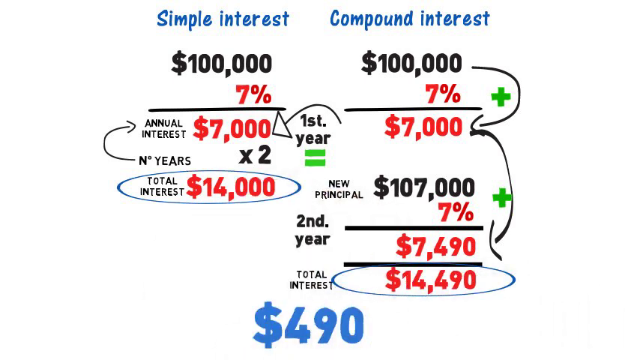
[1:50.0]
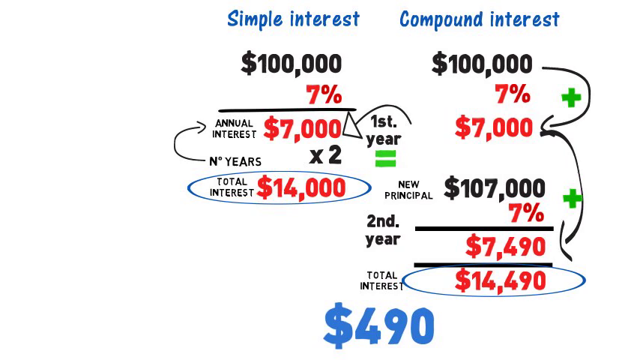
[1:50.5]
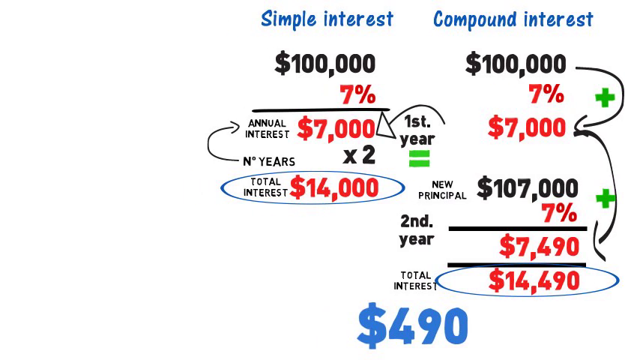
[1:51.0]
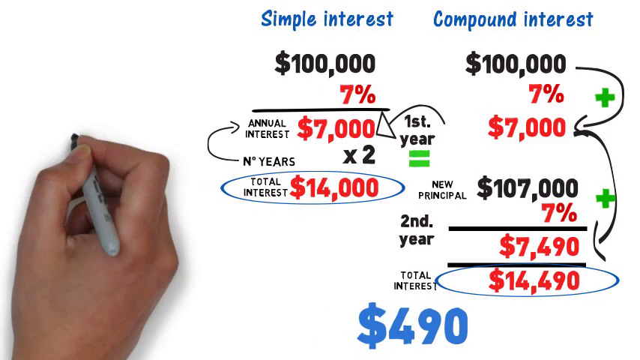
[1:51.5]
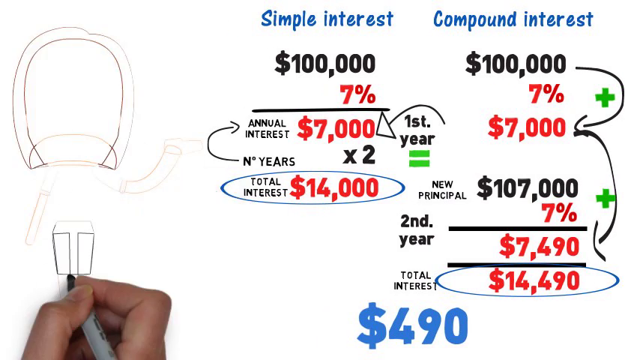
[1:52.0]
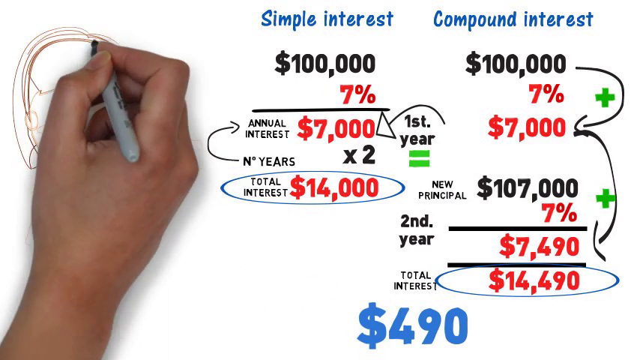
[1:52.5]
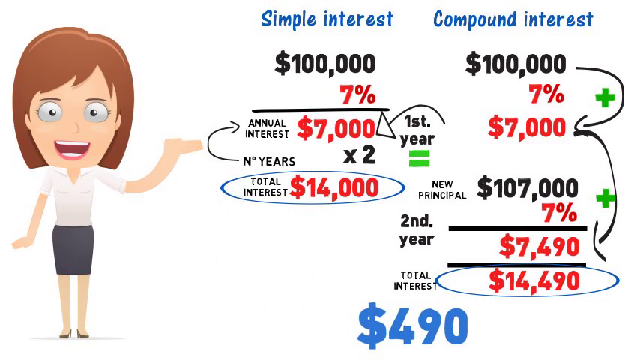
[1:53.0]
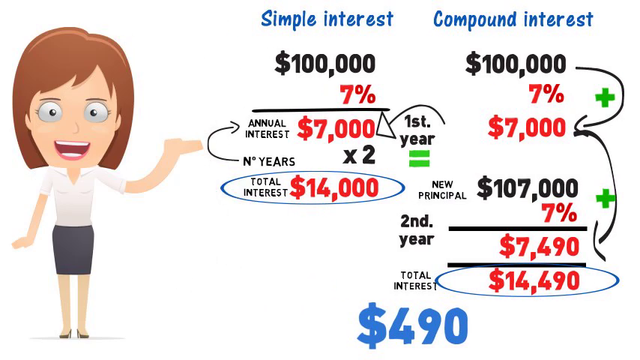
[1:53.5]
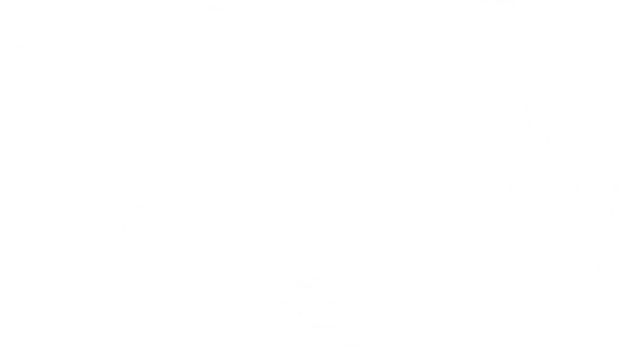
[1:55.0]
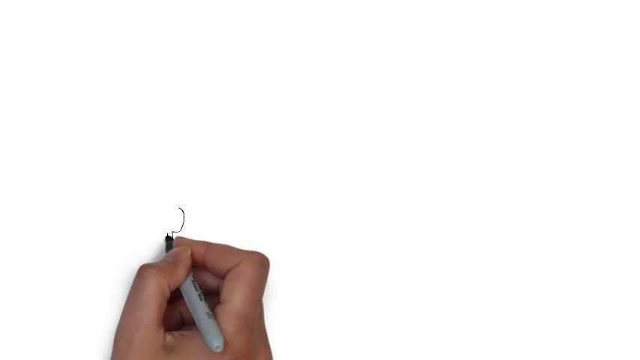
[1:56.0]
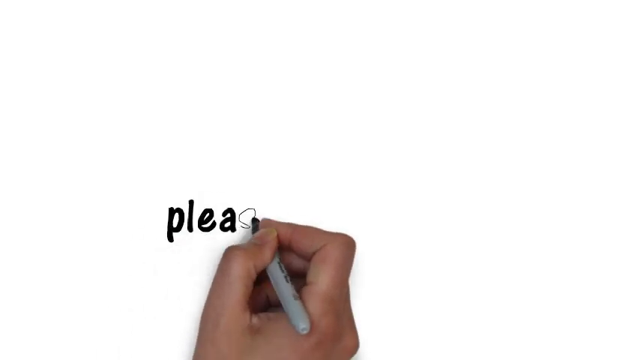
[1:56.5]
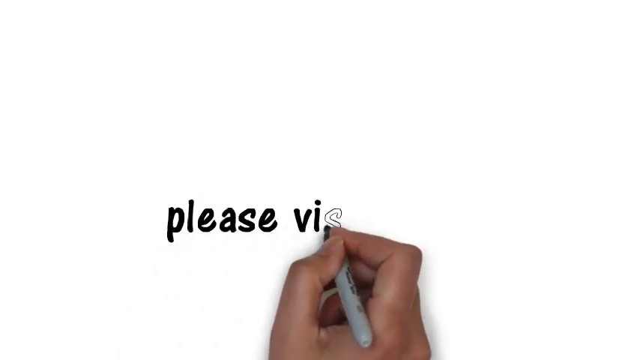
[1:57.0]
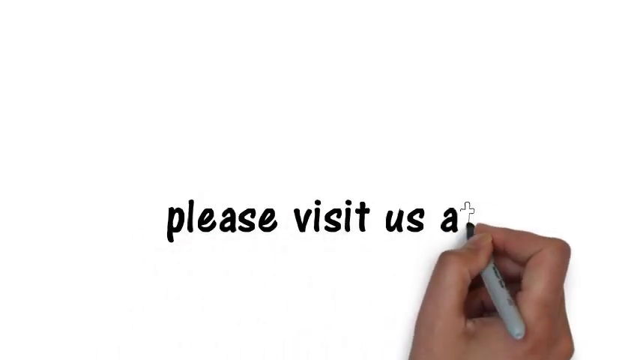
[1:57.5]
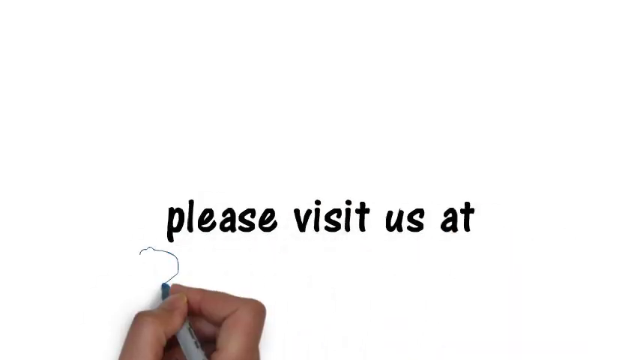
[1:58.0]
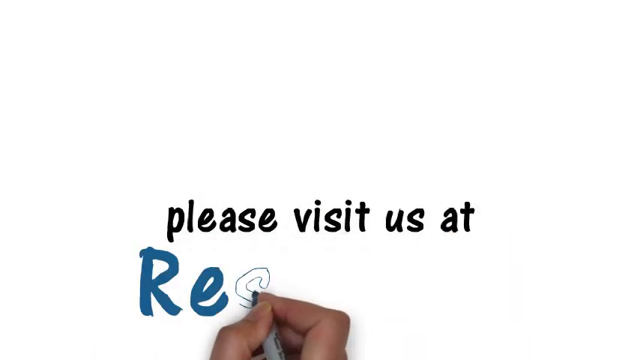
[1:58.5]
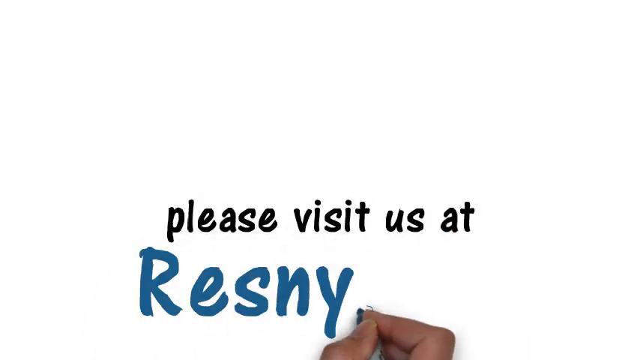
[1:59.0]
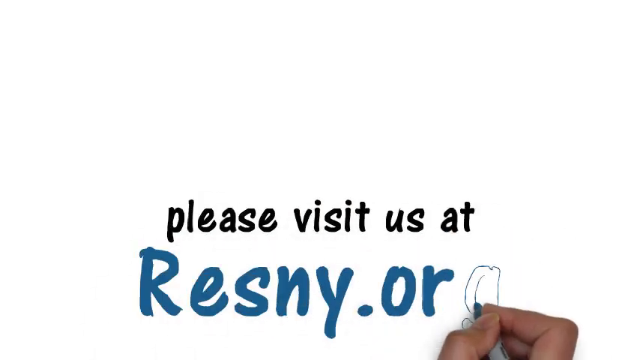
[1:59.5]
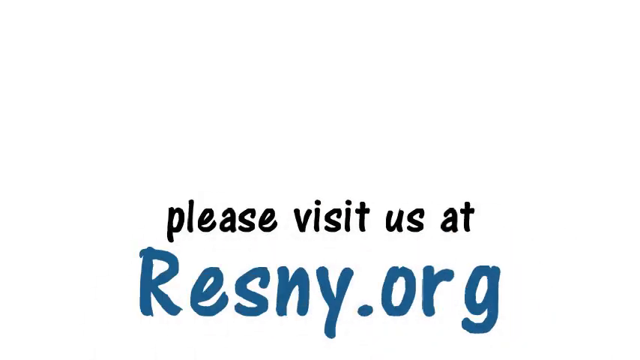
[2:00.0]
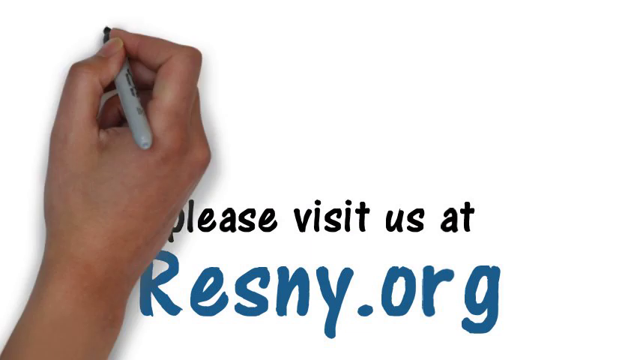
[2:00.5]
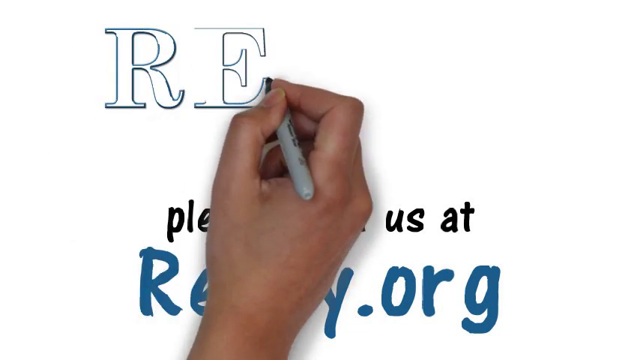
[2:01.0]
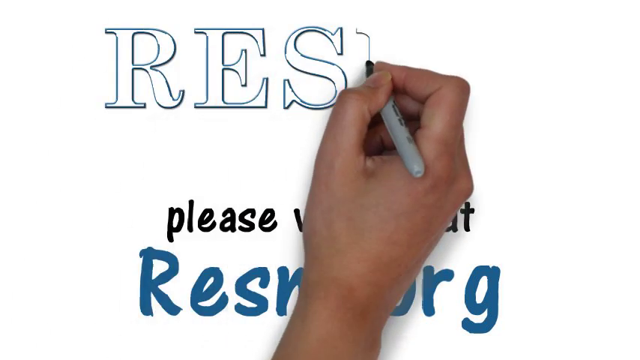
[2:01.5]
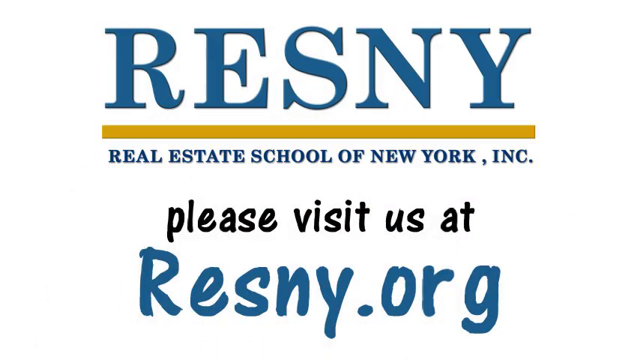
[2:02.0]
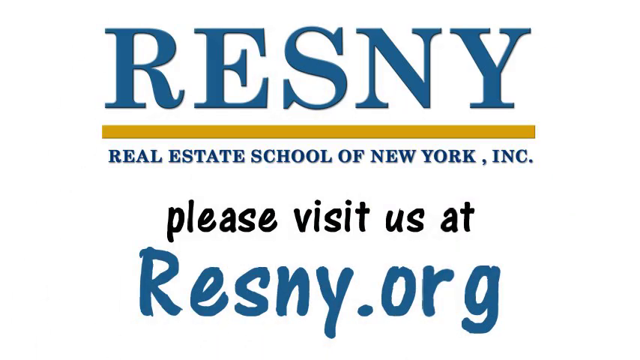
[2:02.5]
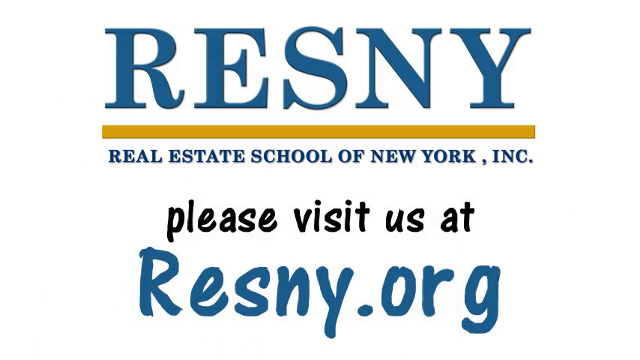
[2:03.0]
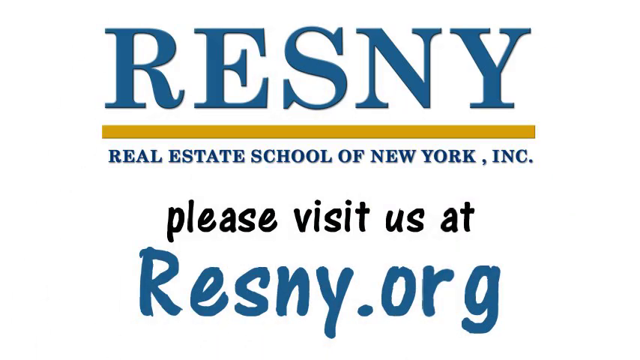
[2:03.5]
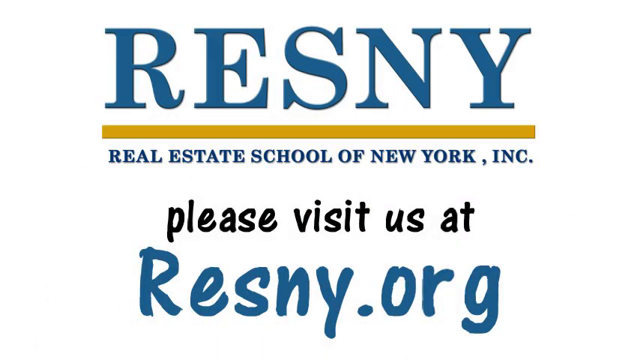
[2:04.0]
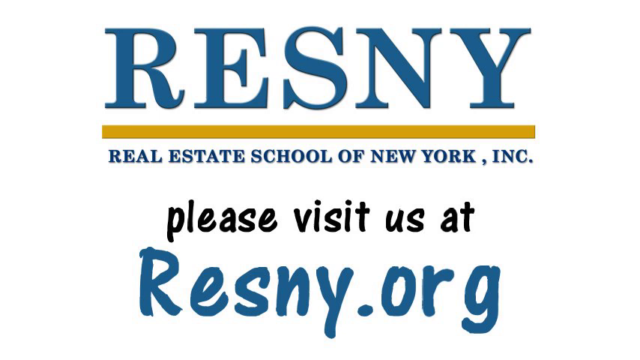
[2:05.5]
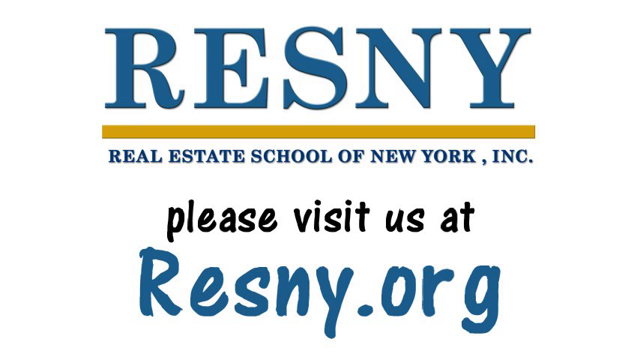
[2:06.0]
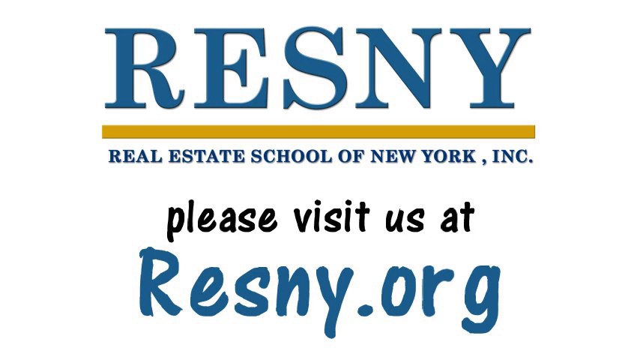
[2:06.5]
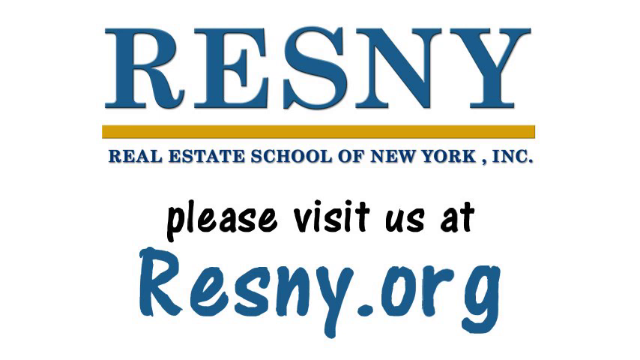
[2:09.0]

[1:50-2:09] The hand circles the $14,490 in the "Compound Interest" column and then writes "$490" below in blue, possibly marking the difference between the two. The camera seems to move to the left, and the caricature of the woman is redrawn, smiling and pointing with her hand at everything that was written, possibly representing a female teacher. The video ends on a white background with the text "Please visit us at resny.org" on screen, and the logo of the Real Estate School of New York reappears at the top of the screen.